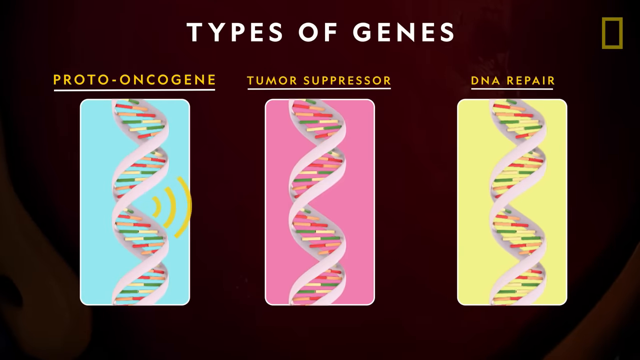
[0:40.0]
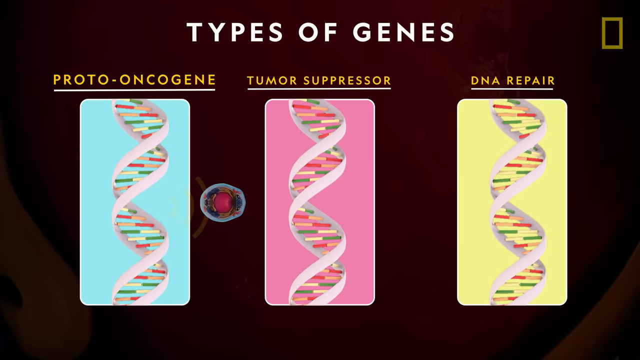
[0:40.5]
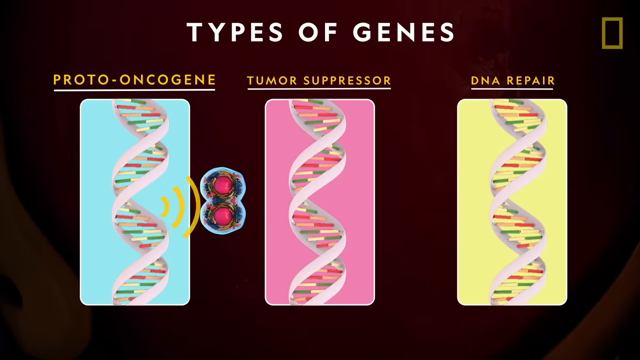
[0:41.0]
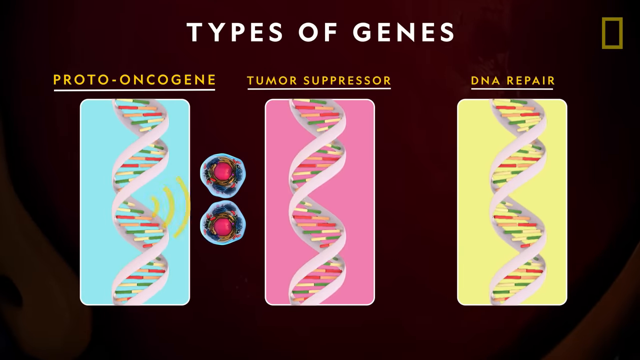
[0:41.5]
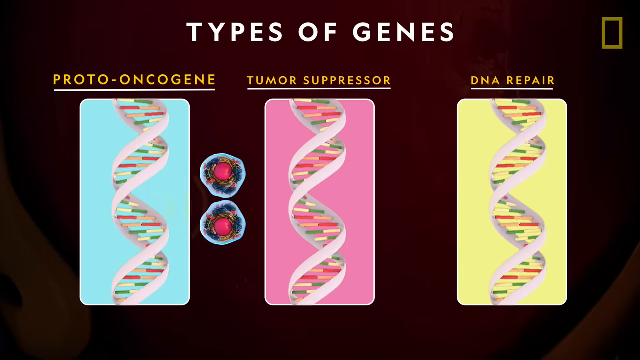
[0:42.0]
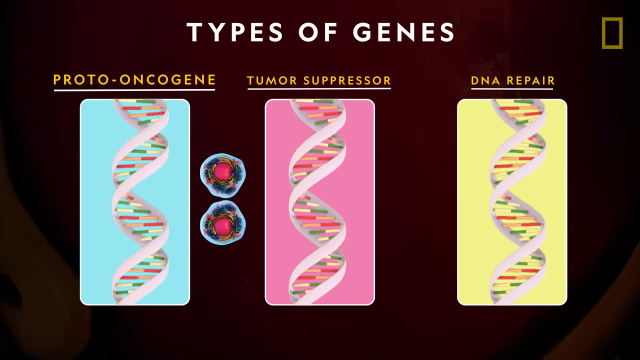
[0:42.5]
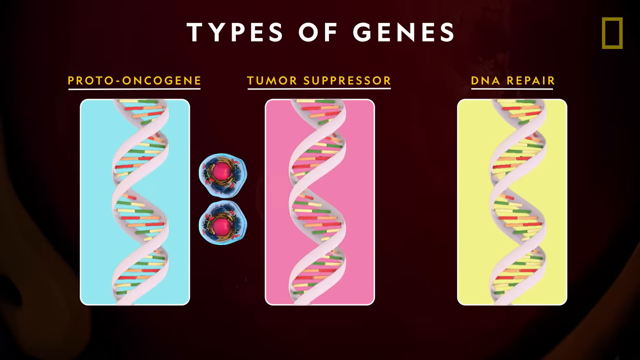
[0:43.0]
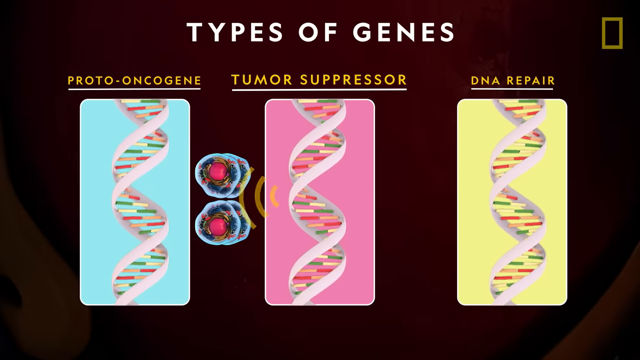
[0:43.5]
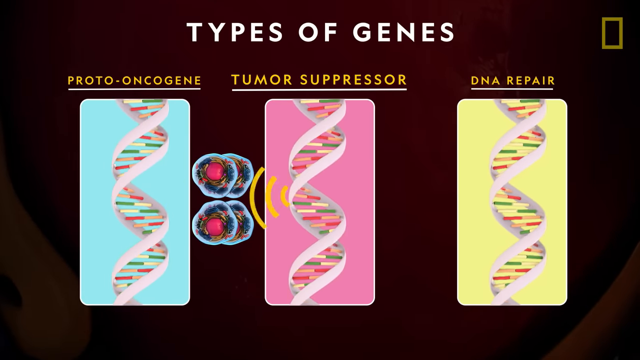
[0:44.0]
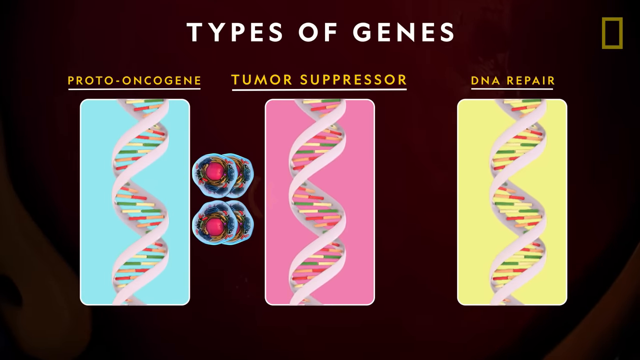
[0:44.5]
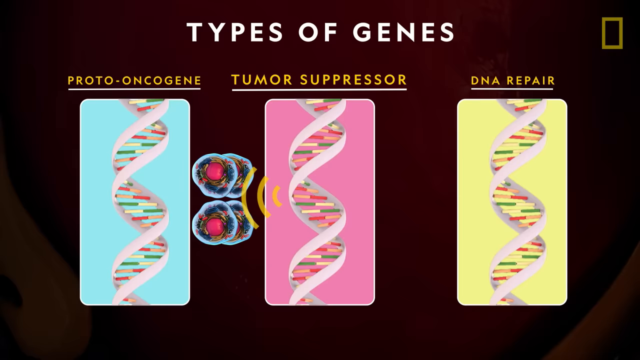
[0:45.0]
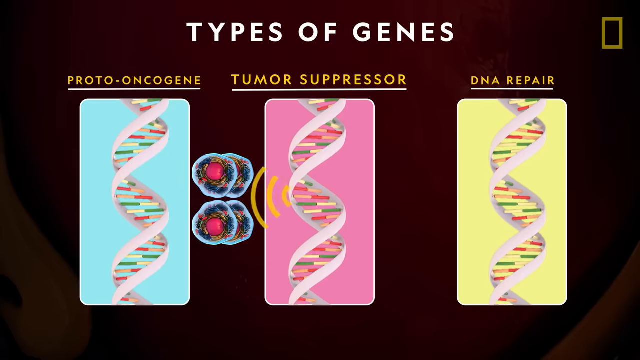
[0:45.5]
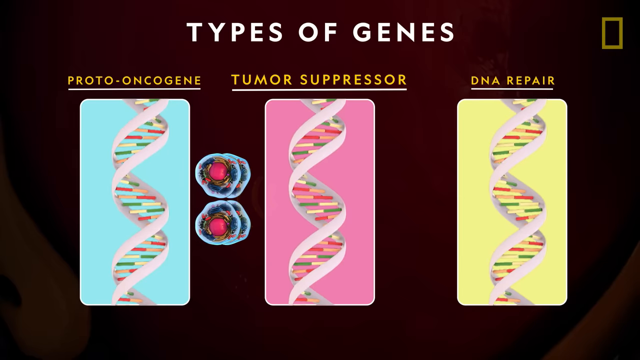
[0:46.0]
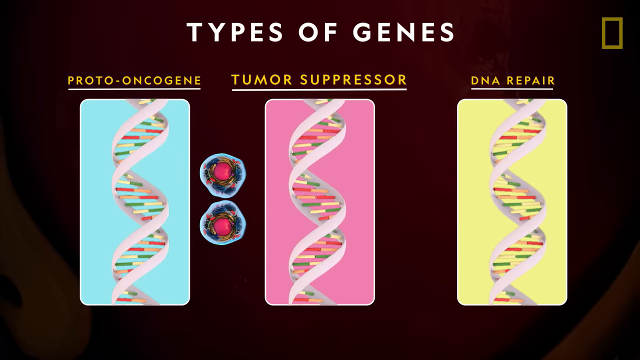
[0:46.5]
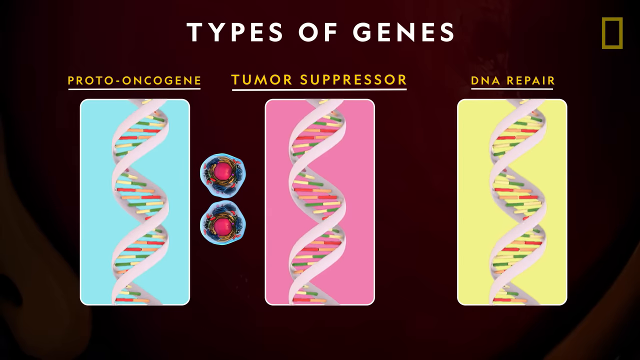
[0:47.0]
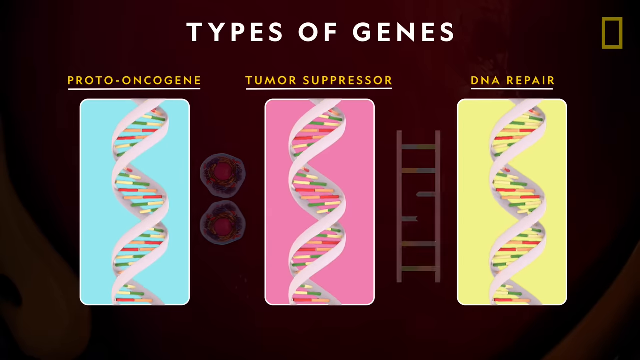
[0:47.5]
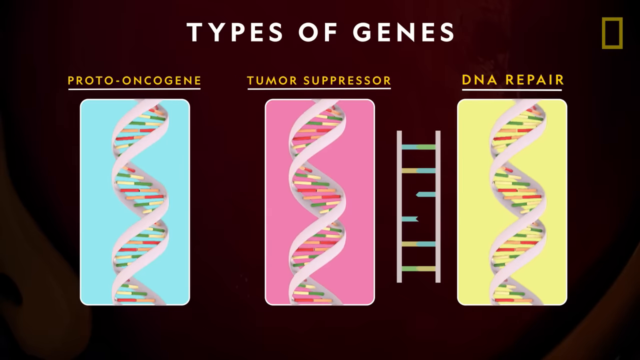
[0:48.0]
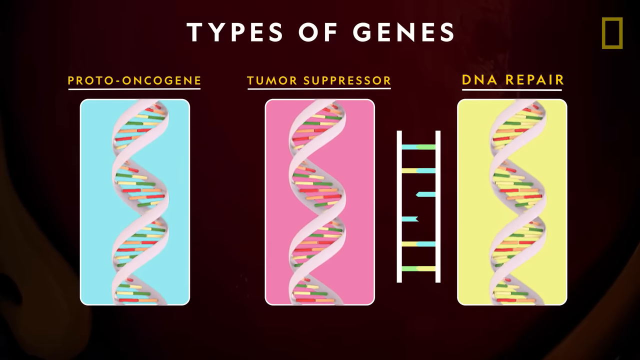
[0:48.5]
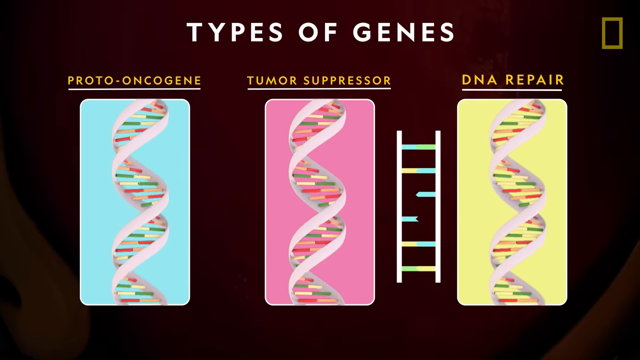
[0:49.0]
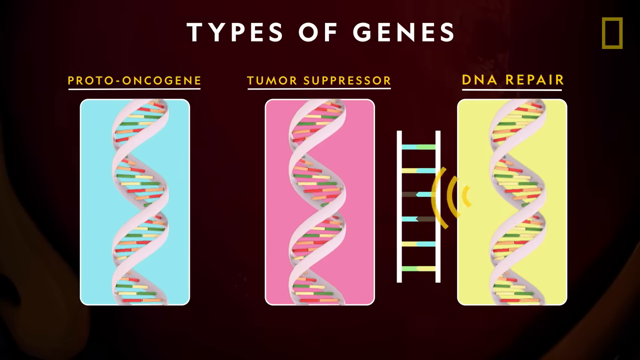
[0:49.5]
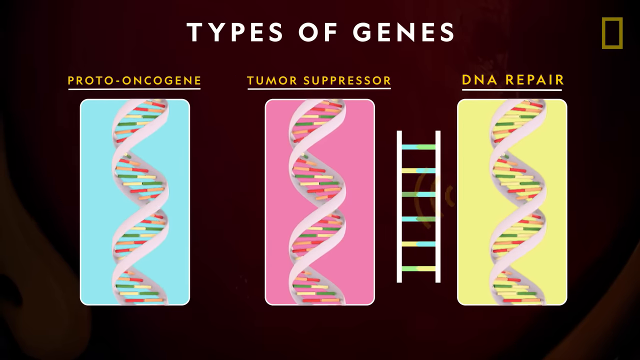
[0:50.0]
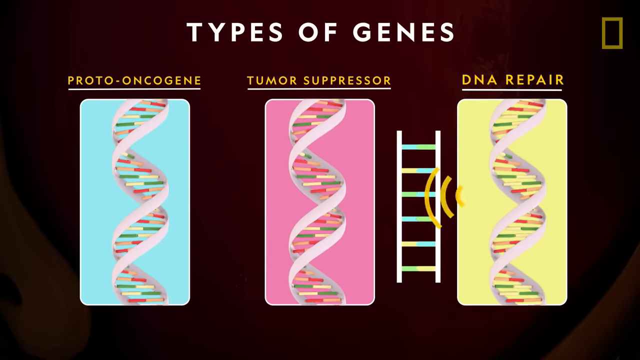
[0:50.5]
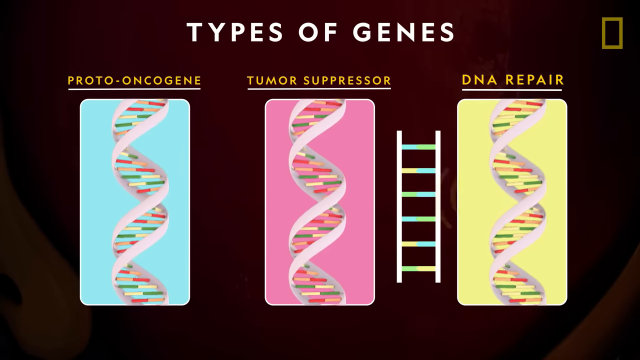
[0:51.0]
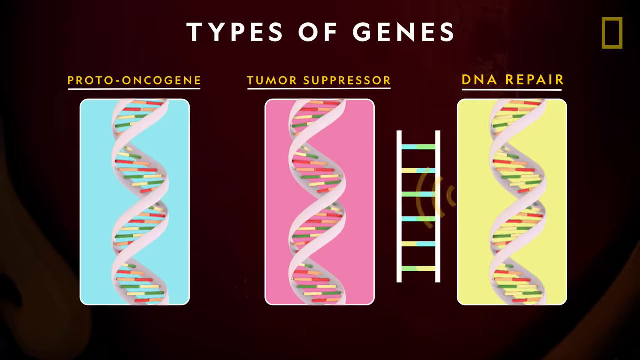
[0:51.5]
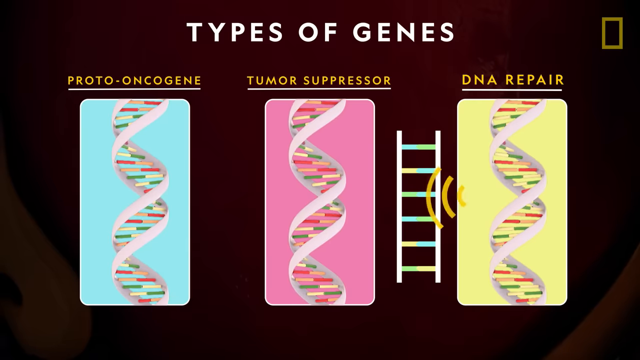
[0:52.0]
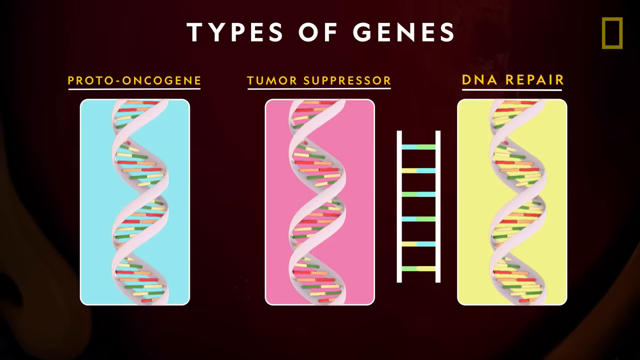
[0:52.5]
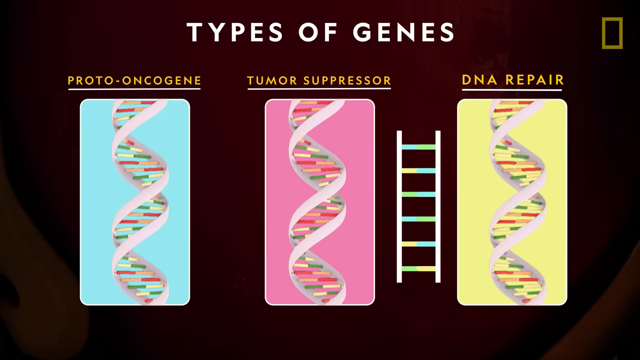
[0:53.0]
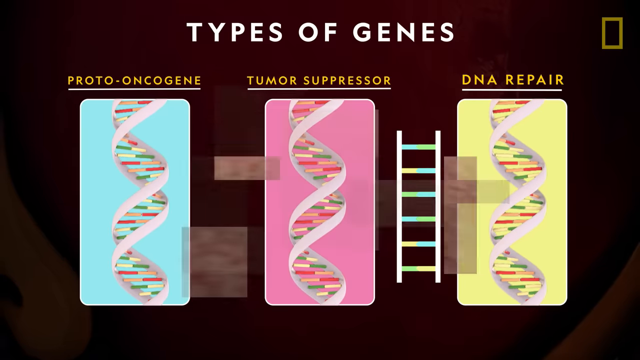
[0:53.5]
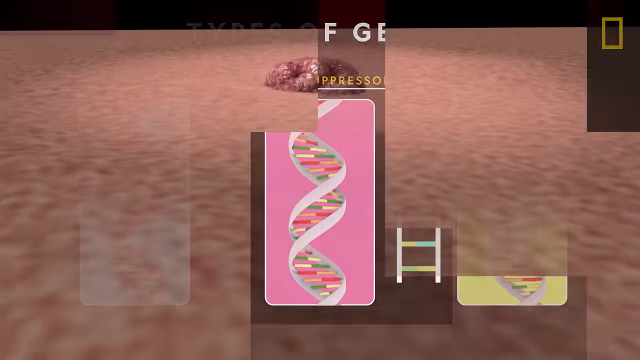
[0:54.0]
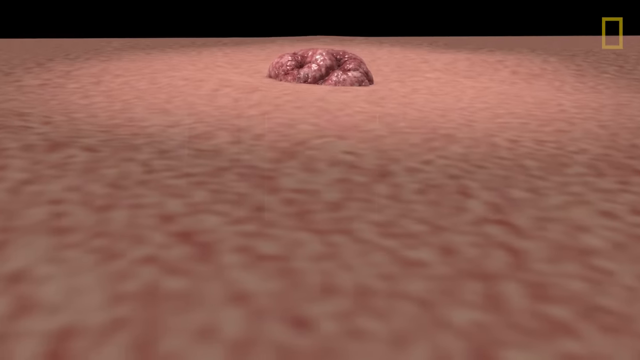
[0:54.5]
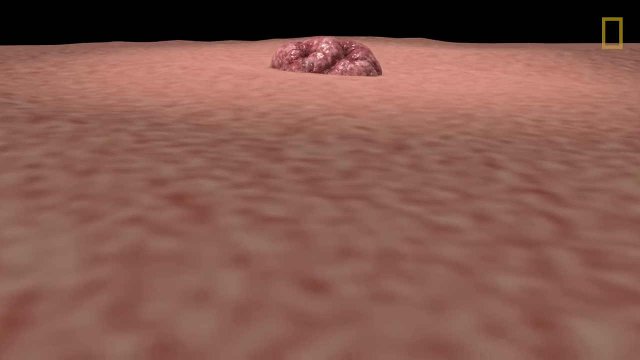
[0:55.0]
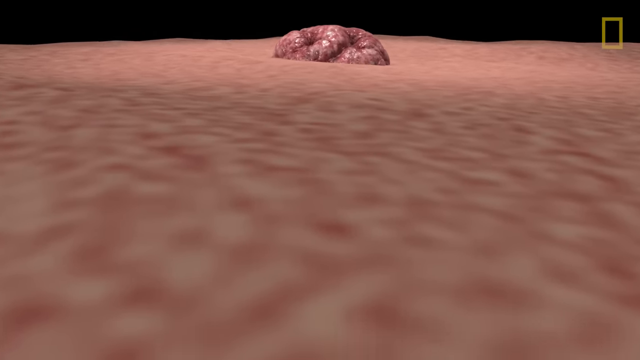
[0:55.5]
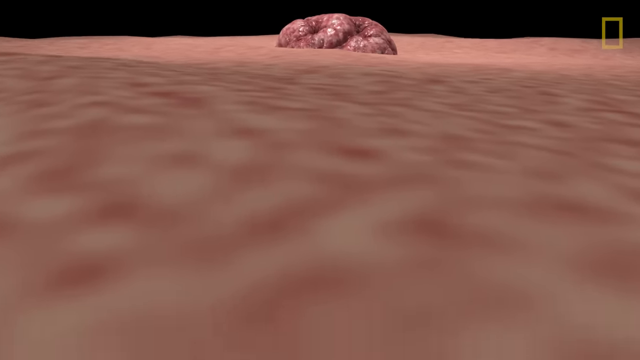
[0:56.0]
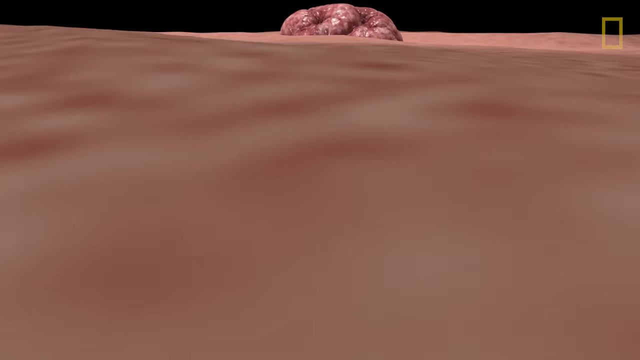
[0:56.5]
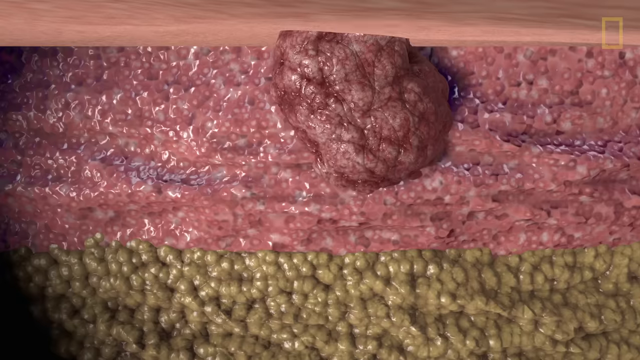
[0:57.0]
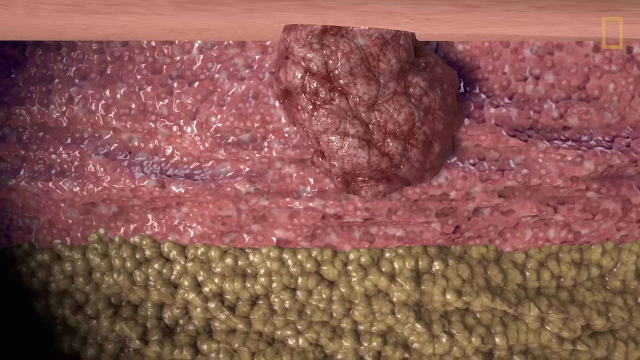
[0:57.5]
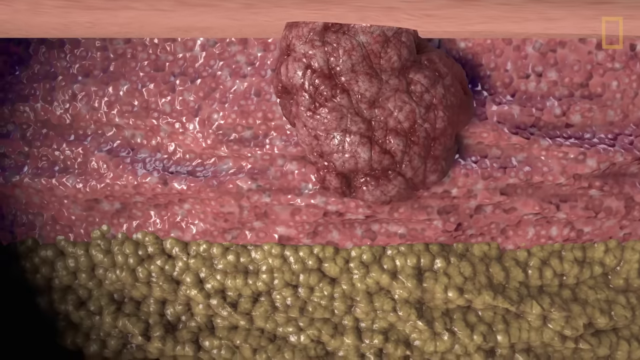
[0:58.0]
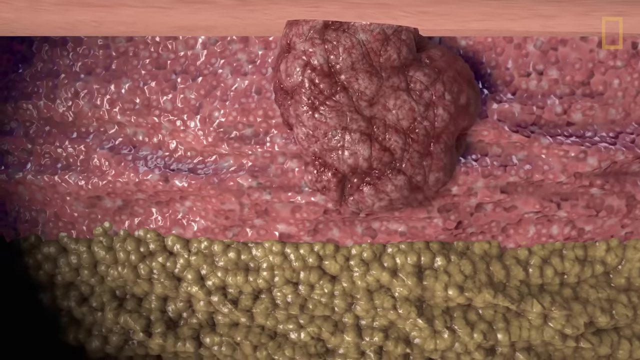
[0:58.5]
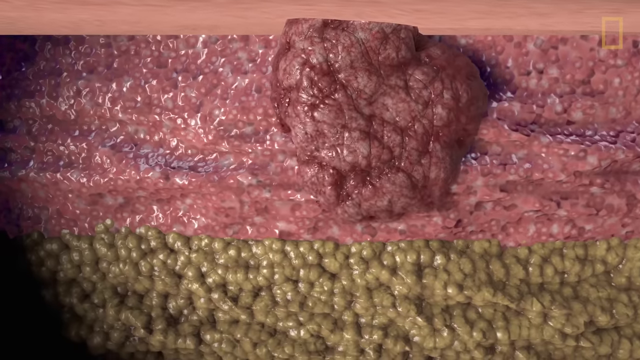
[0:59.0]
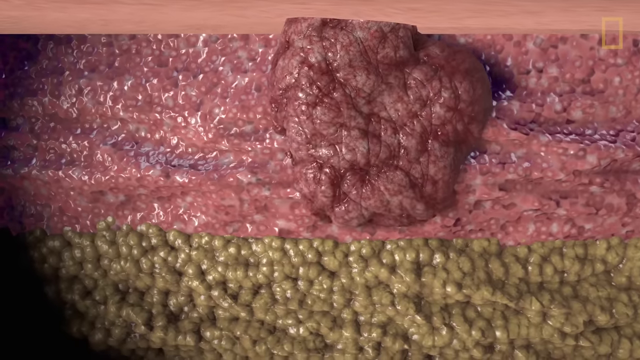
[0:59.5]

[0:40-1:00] A label in the center points to the cell and expands into a new slide titled "types of genes," in white text on a background that is a gradient from black to deep red. The main part of the slide holds three vertically oriented rectangular images, each with a DNA double helix. The leftmost has a light blue background, the middle a pink background, and the rightmost a yellow background. Above each image is a label in yellow text with a white underline: "proto-oncogene" on the left, "tumor suppressor" in the middle and "DNA repair" on the right. The slide then shifts to a computer-generated graphic of what looks like a cell, possibly a wall, and a mound increases in size and moves forward over that cell wall.